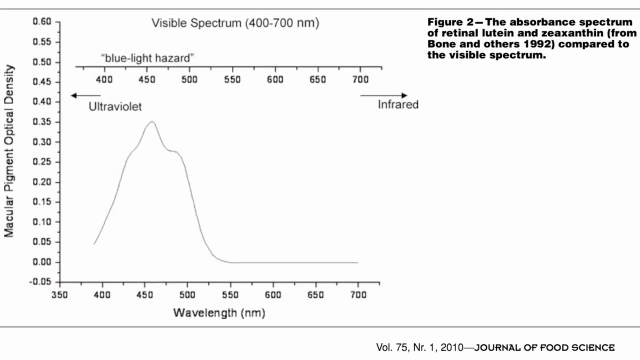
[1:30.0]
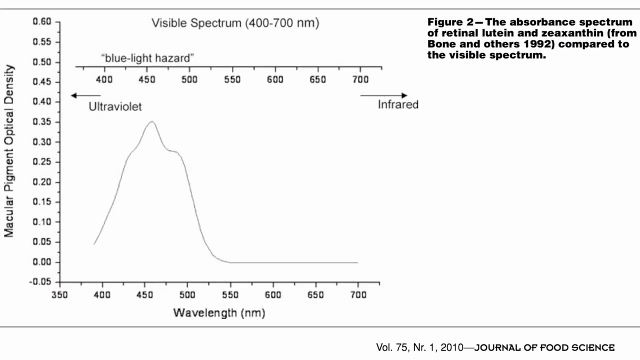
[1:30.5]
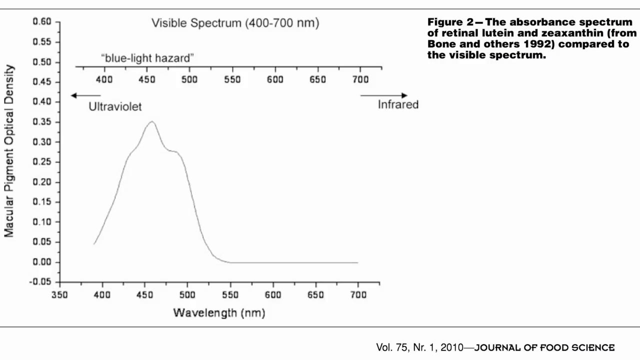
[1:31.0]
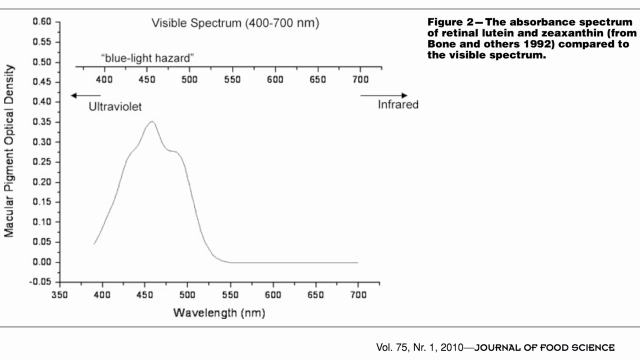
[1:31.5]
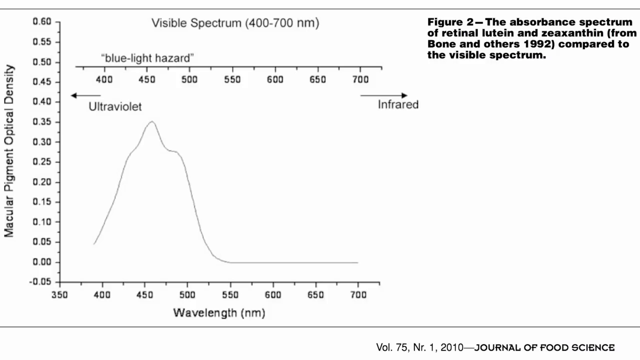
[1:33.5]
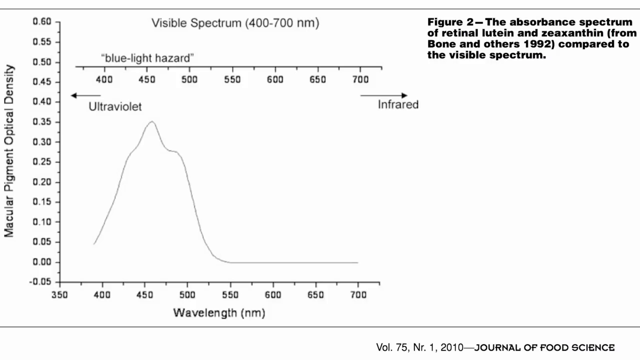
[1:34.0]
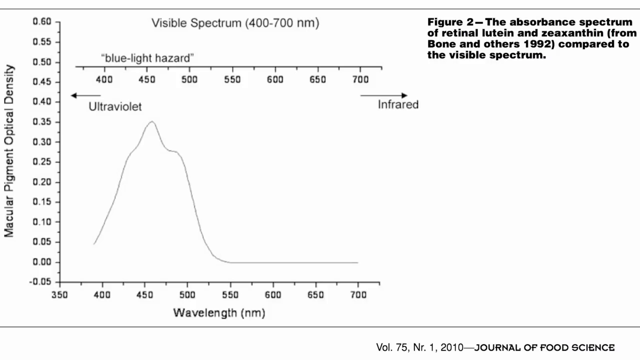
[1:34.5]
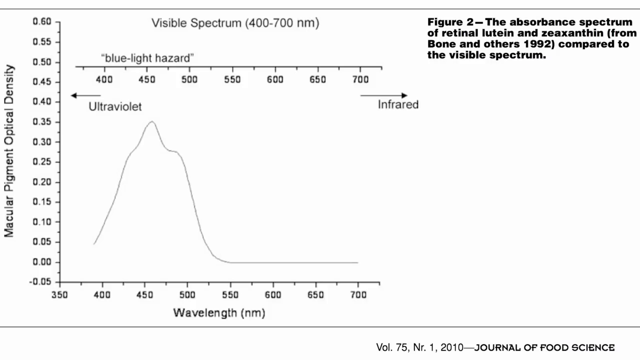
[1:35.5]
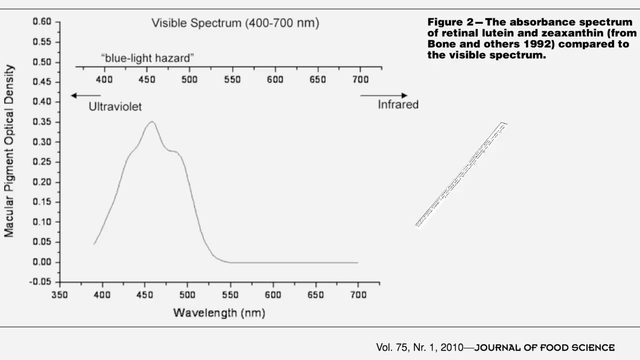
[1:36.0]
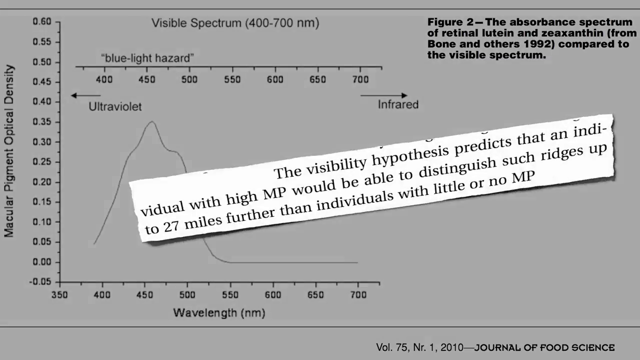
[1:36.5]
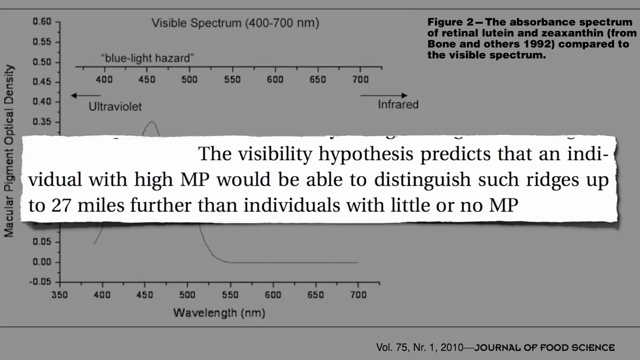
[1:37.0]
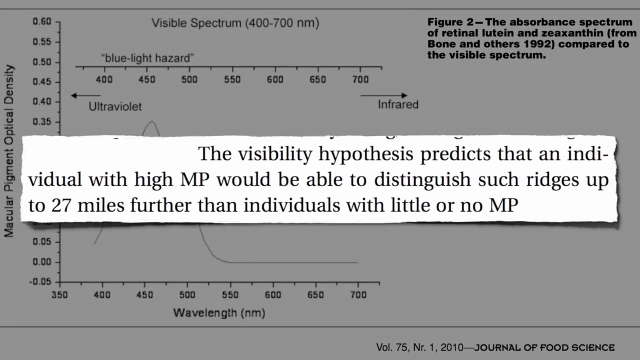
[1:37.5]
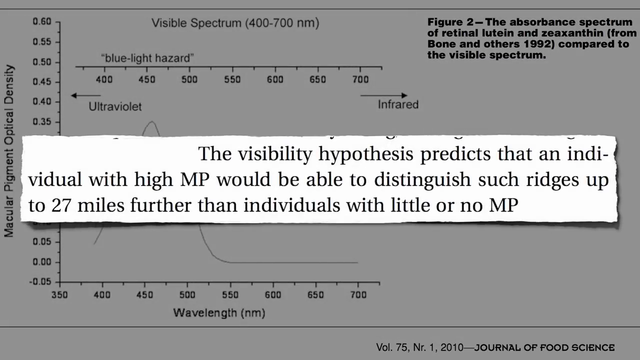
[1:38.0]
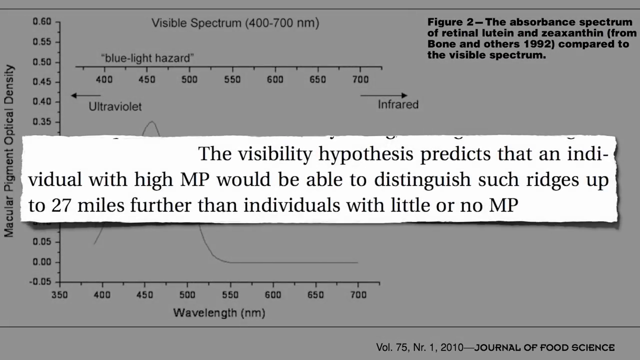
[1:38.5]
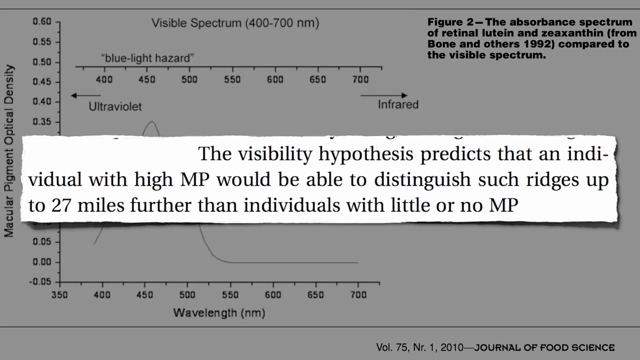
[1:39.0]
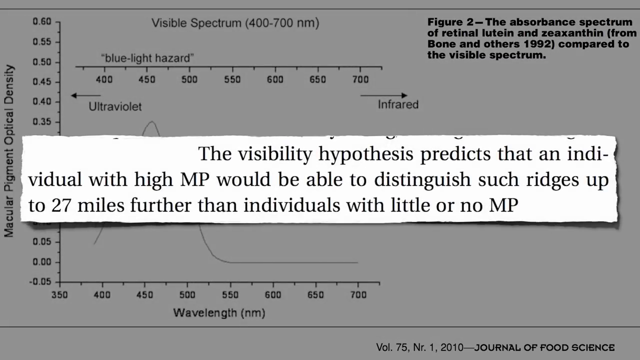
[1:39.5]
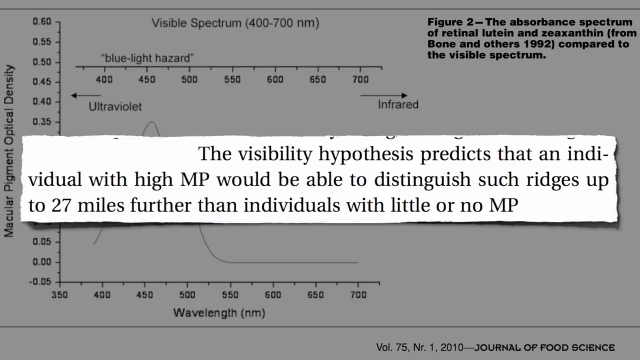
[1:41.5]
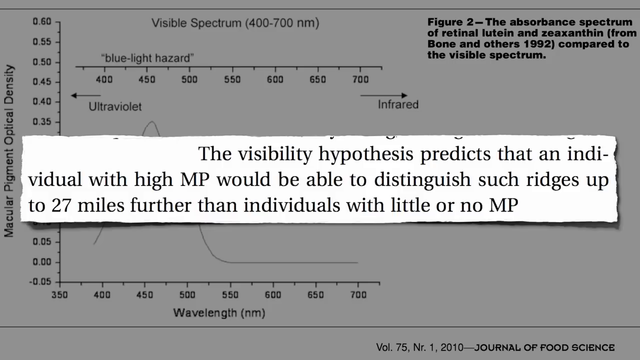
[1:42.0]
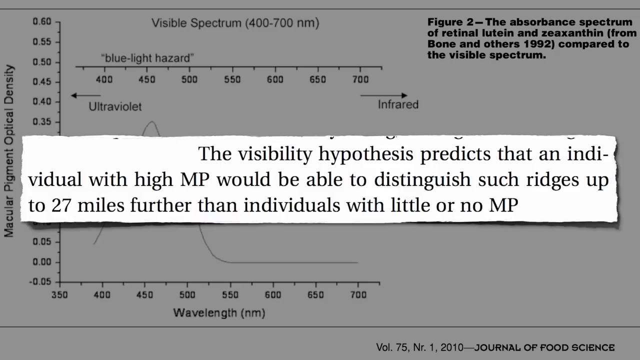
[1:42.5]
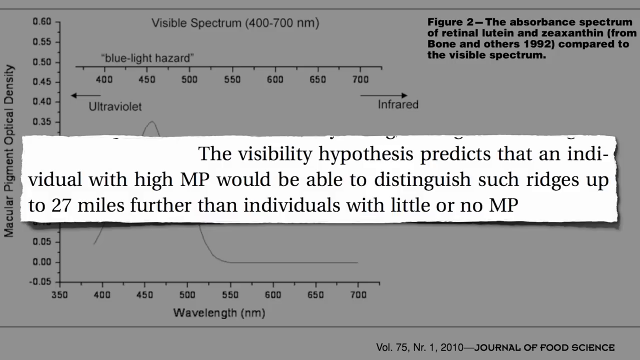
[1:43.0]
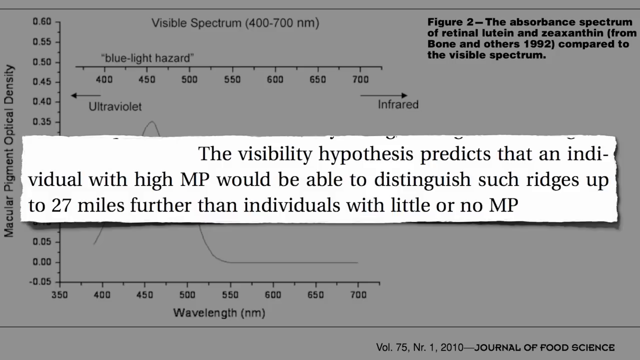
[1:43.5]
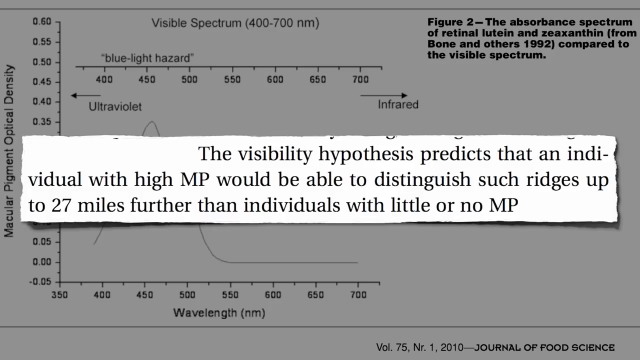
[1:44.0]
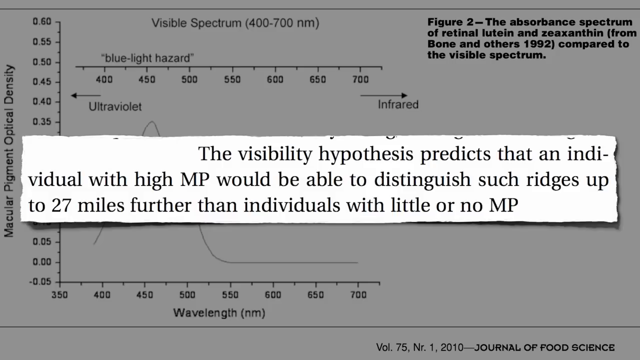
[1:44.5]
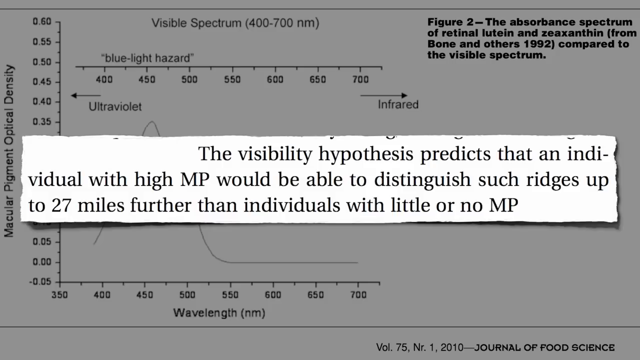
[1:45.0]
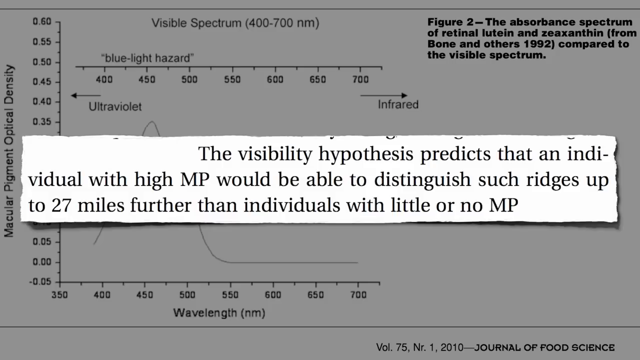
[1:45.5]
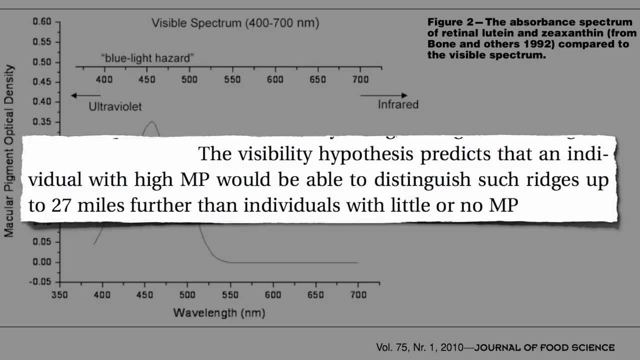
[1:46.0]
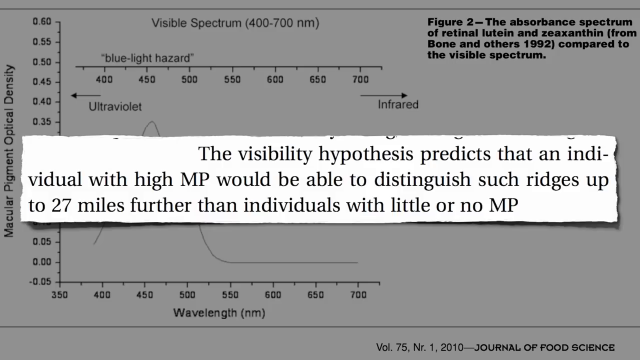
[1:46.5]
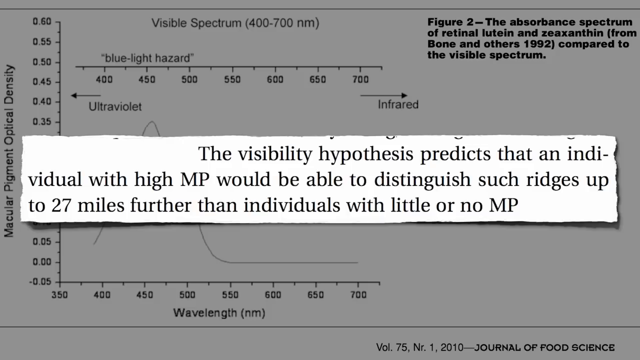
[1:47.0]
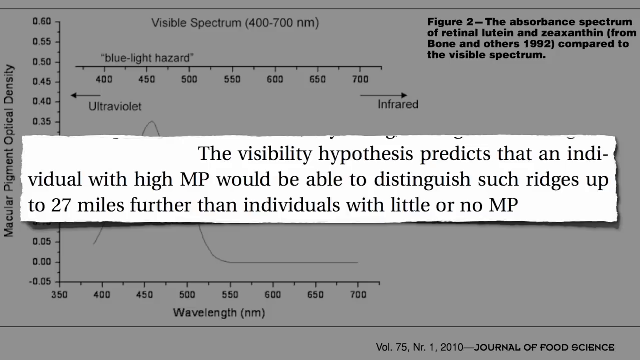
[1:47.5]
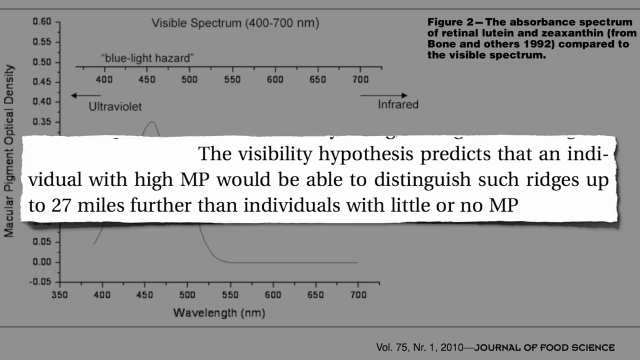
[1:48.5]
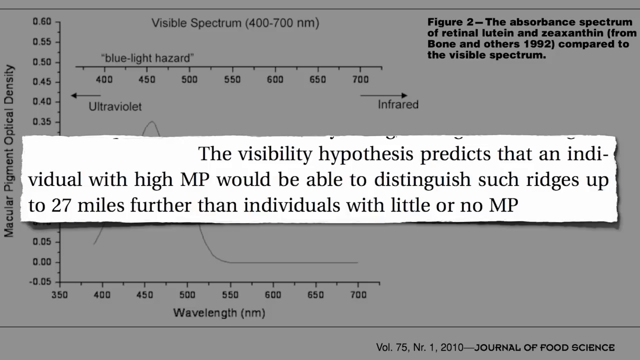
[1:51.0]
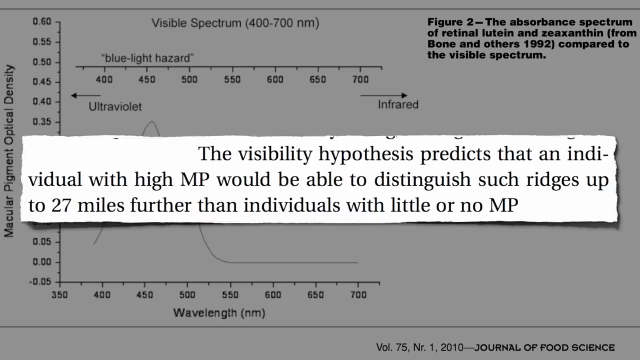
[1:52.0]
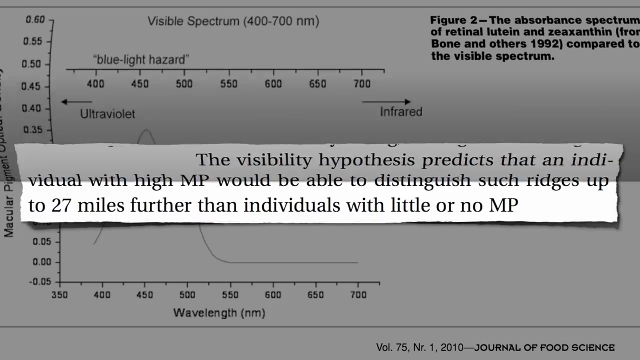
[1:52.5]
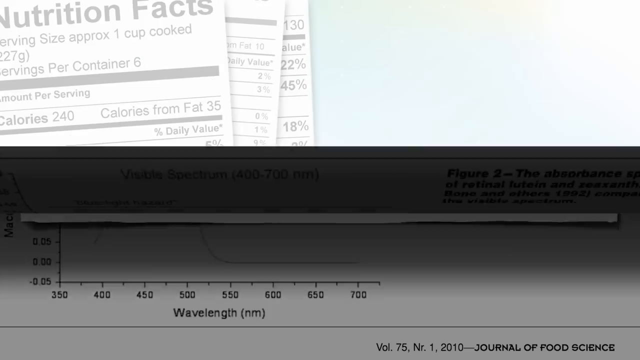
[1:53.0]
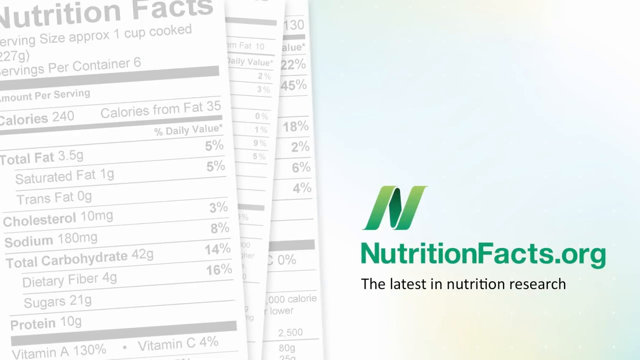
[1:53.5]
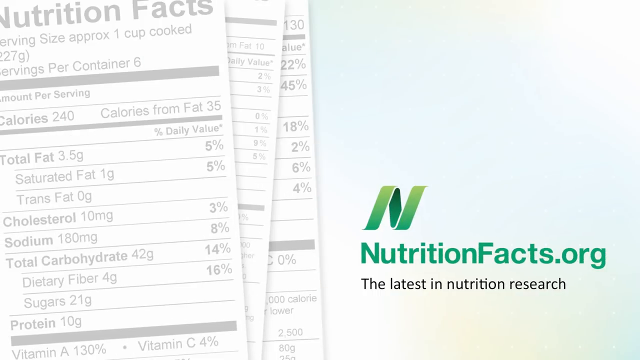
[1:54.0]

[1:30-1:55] A graph appears with a single line that extends from the bottom left, peaks upward to the right, descends as sharply as it ascended, and then begins to flatten out. At the top of the graph are the words "visual spectrum, 400-700 nm." To the right, text reads, "Figure 2, the absorbance spectrum of retinol, lutein, and zeaxanthin from Bone and others, 1992, compared to the visual spectrum." Above the graph are the words "blue light hazard" in quotation marks. The left border carries the words "macular pigment optical density" and numbers from 0.05 to 0.60. The graph is done in black on a white background. Along the bottom of the grid are numbers from 350 on the left to 700 at the far right, and below them the word "wavelength" with "nm" in parentheses. After a transition, a gray shade appears over the graph and a clipping from an article appears over it.